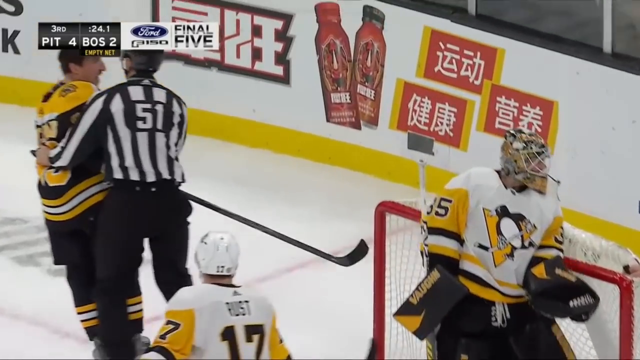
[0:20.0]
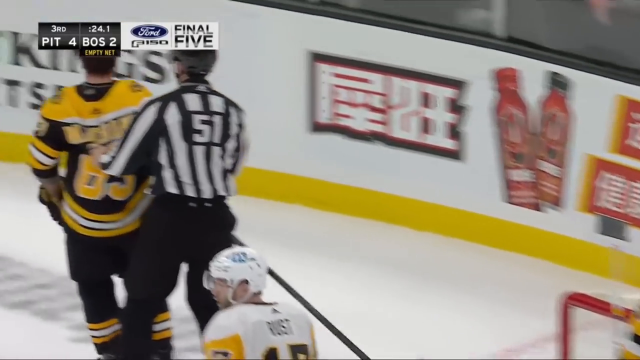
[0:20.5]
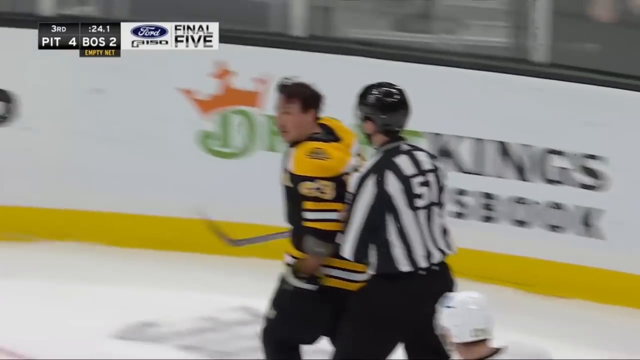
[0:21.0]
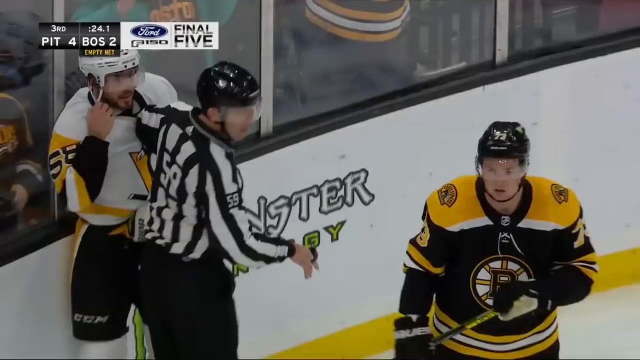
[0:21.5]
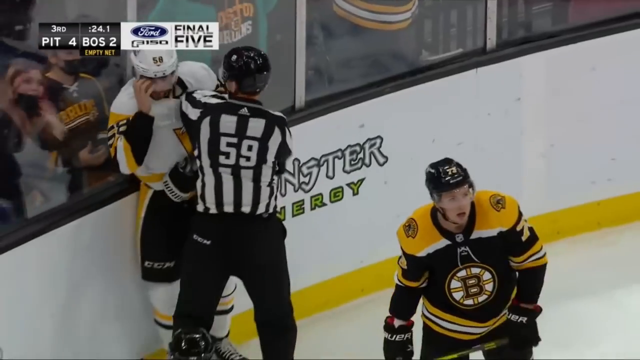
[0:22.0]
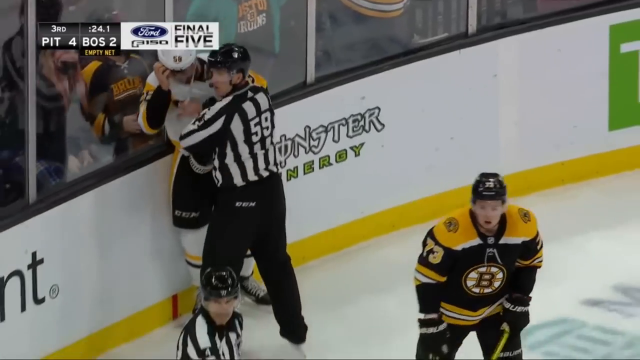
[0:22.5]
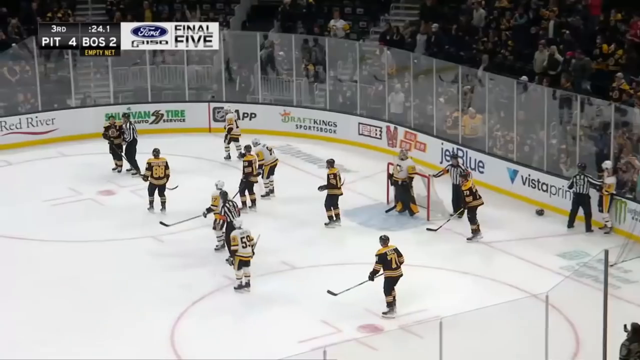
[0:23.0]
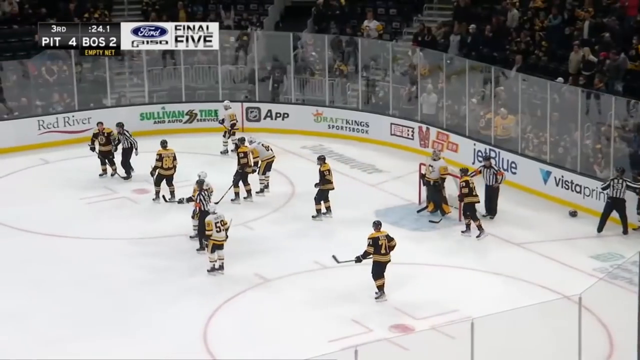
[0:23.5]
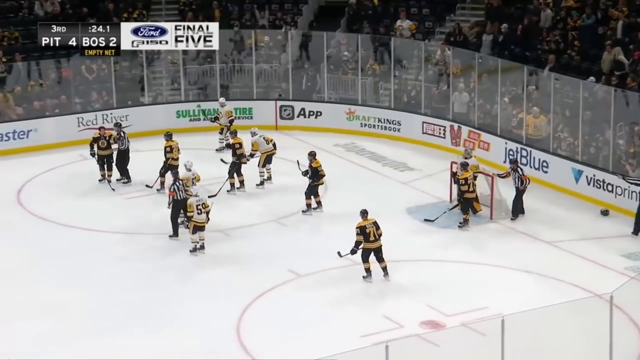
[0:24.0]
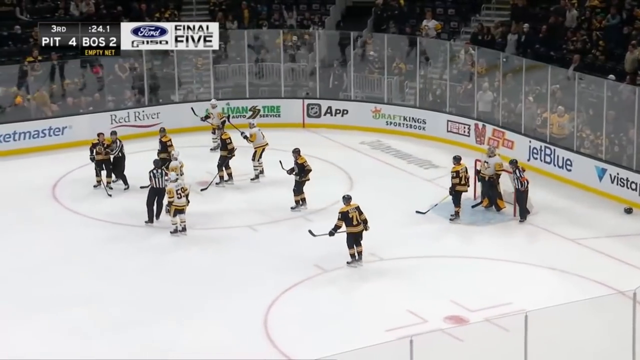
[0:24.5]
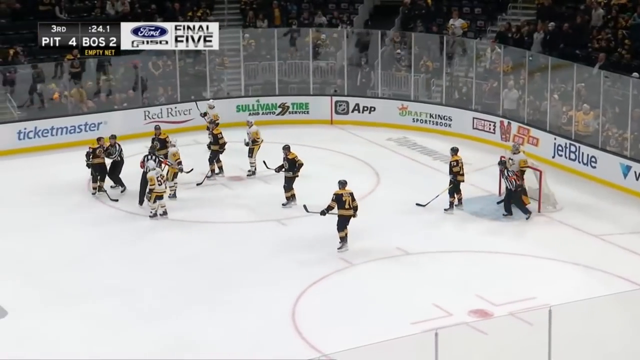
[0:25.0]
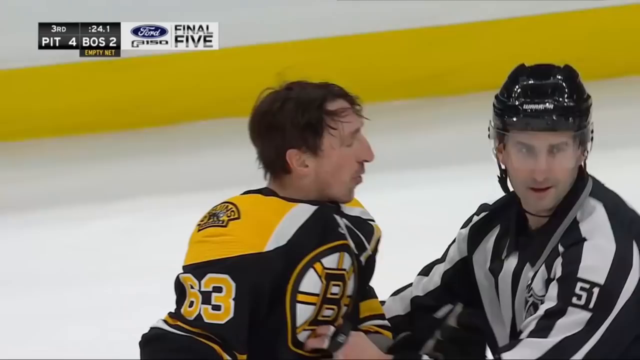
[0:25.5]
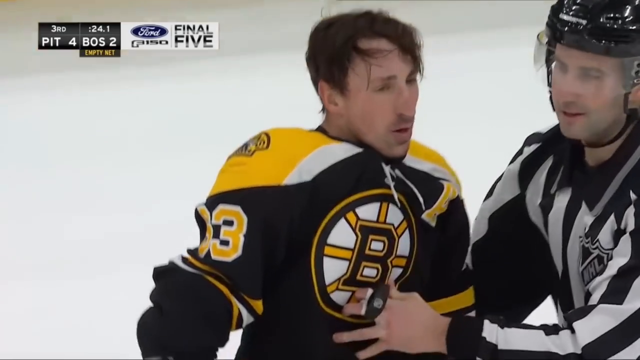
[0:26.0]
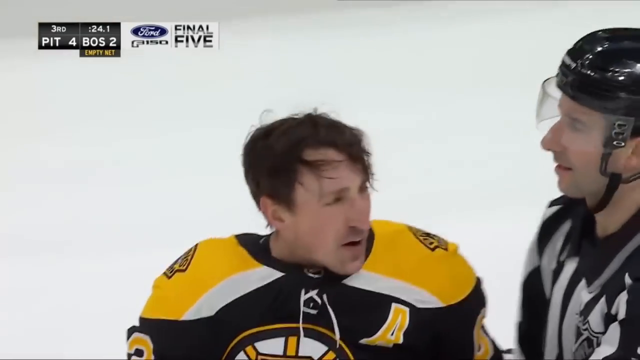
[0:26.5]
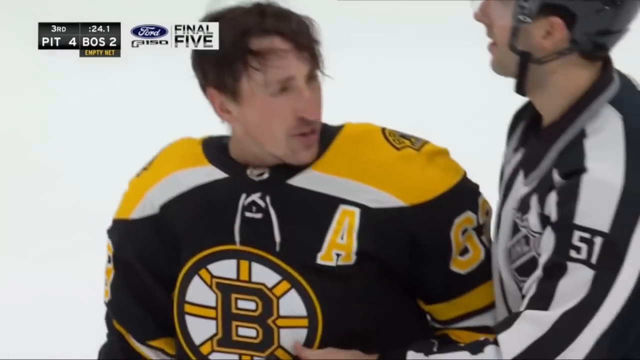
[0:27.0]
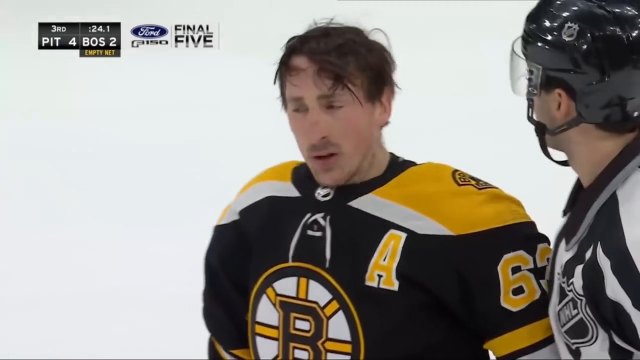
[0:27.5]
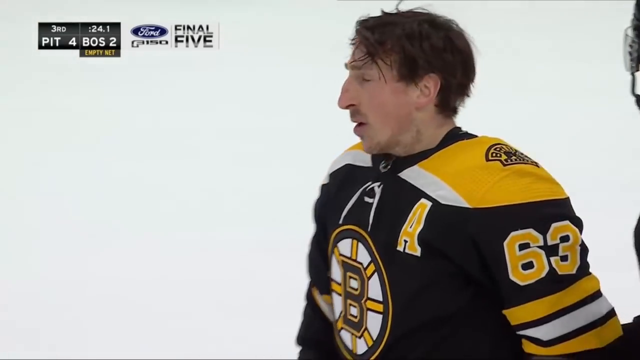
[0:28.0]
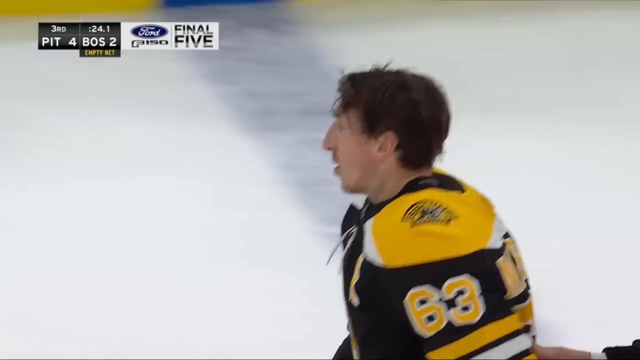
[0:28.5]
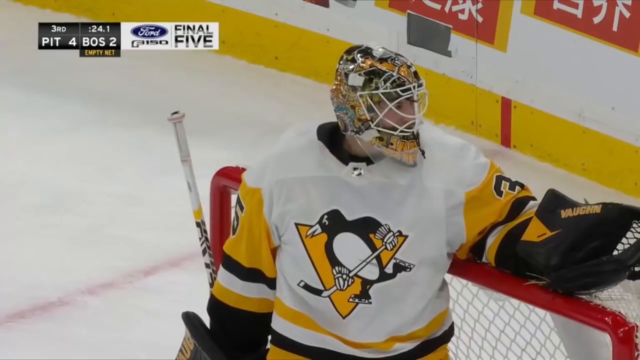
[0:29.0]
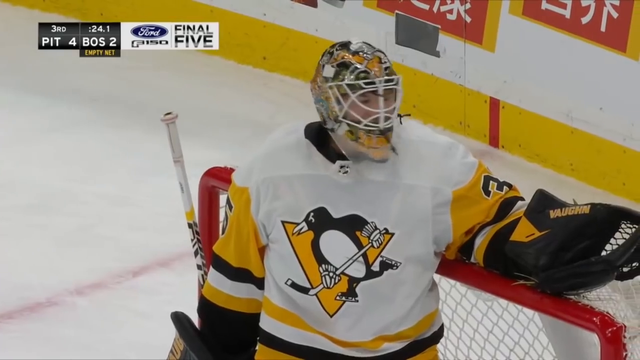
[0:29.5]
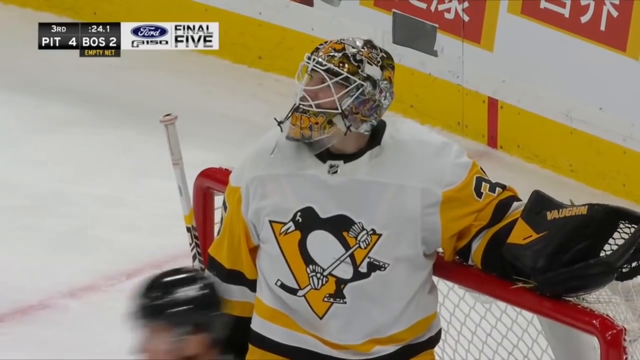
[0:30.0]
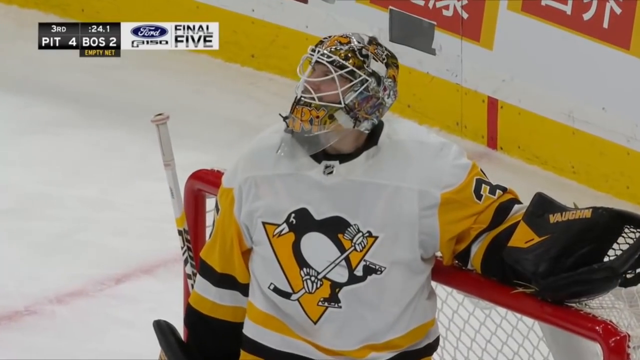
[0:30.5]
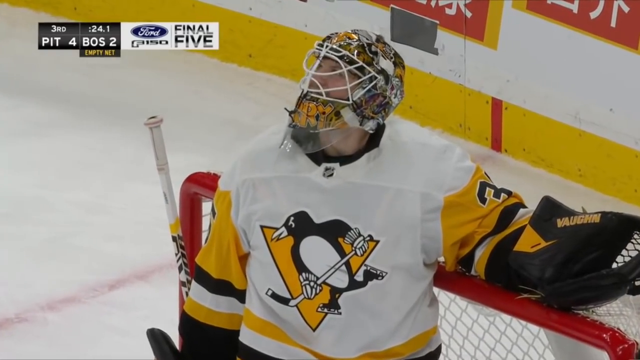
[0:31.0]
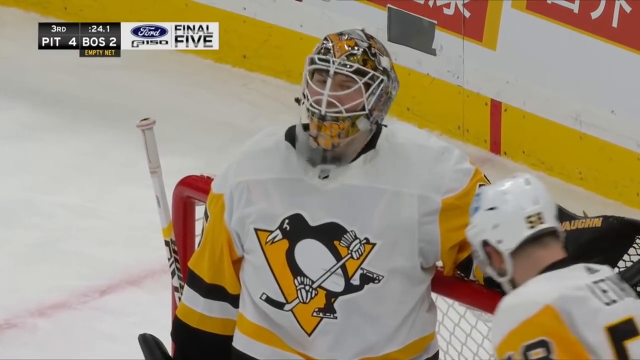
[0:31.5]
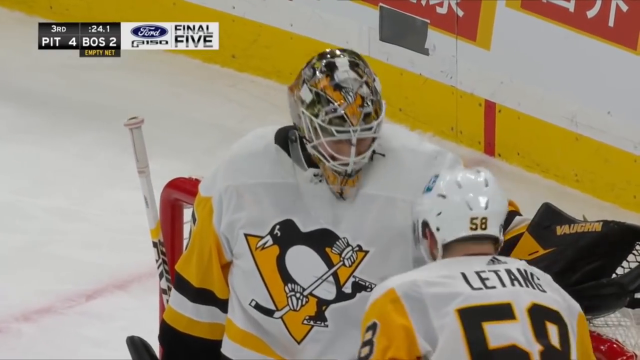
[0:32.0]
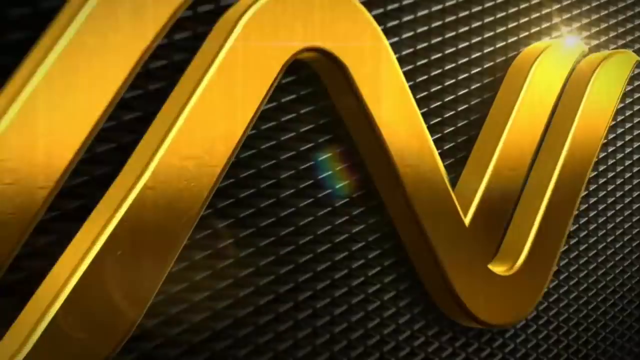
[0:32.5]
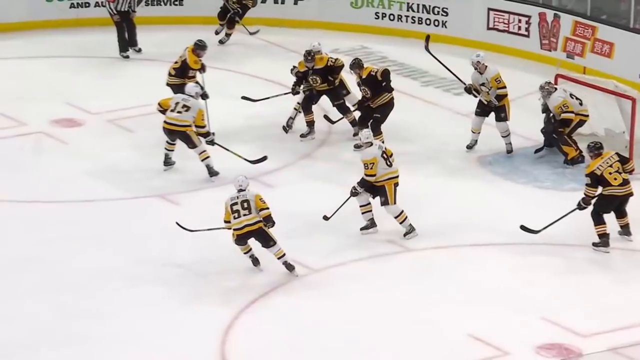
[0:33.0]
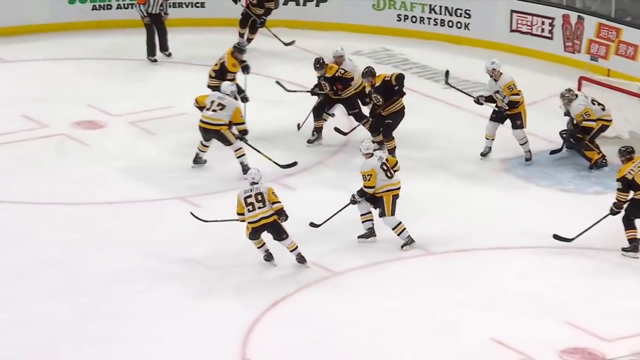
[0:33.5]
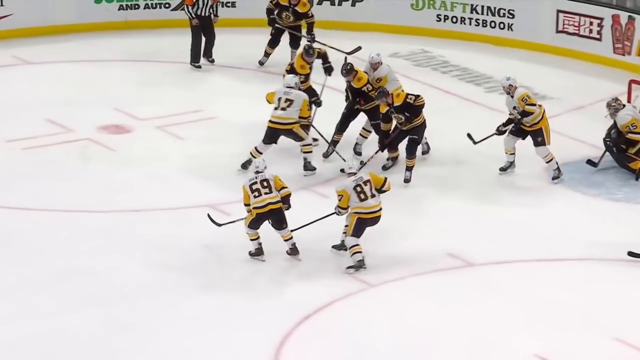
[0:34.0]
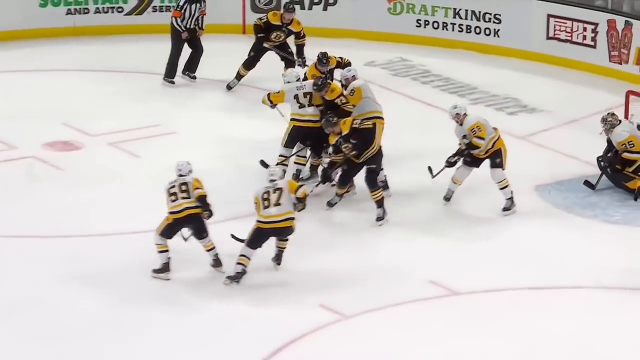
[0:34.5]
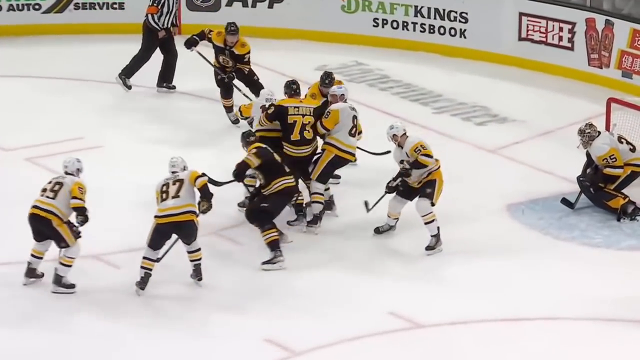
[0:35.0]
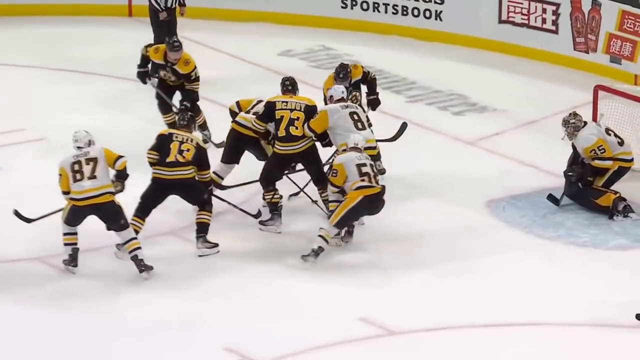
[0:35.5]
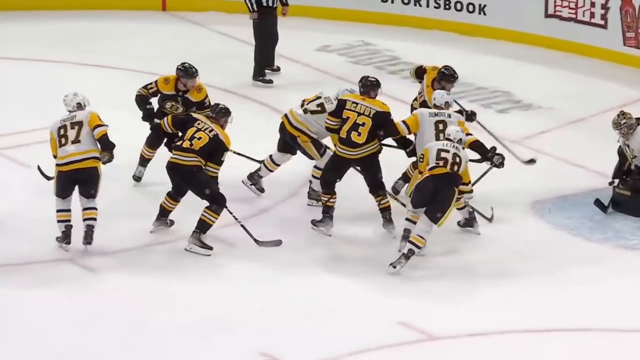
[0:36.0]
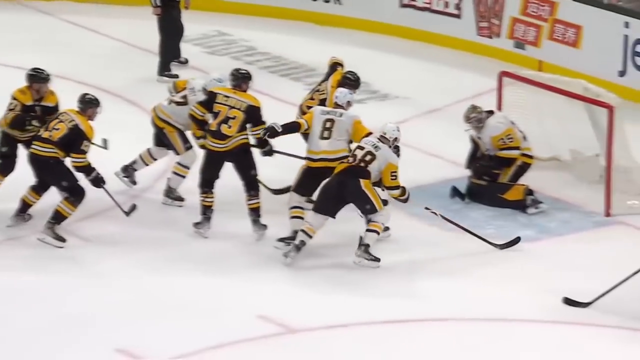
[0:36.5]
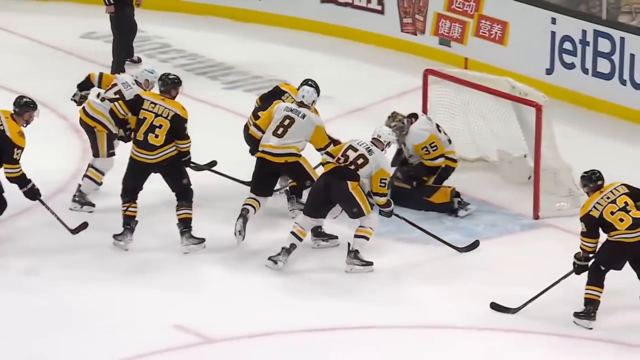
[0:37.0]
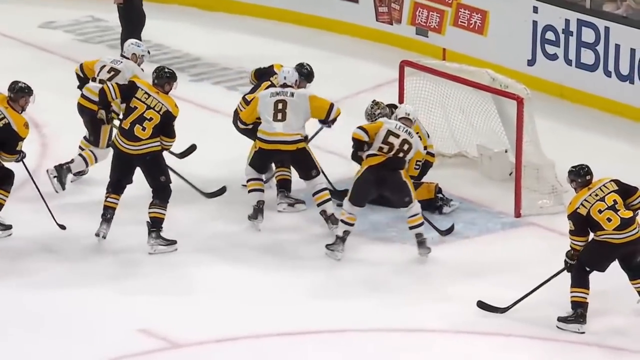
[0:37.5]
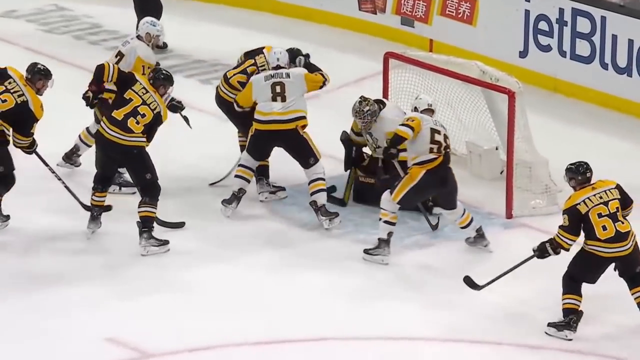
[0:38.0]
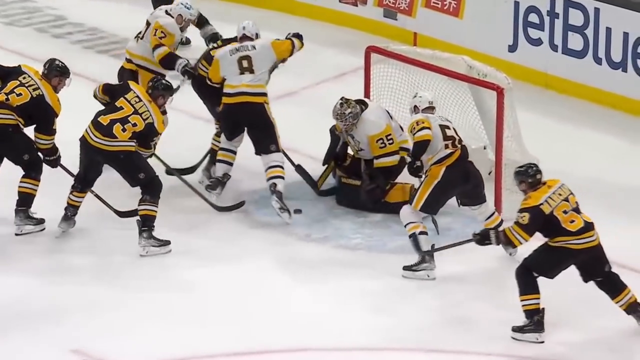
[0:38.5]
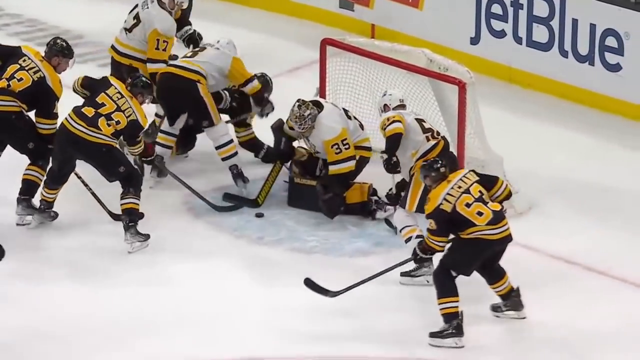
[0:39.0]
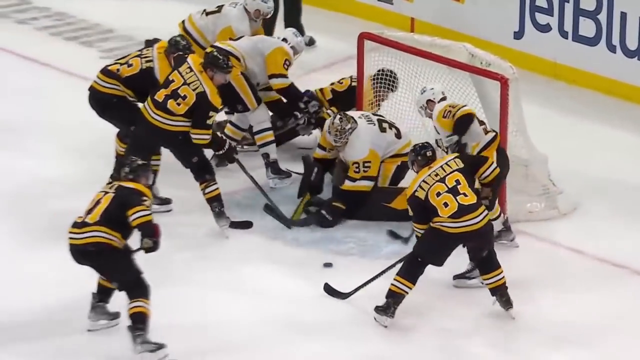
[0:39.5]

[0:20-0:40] A fracas breaks out between players of the two teams. A shot is taken but does not go into the goal, and the players are unhappy with something.